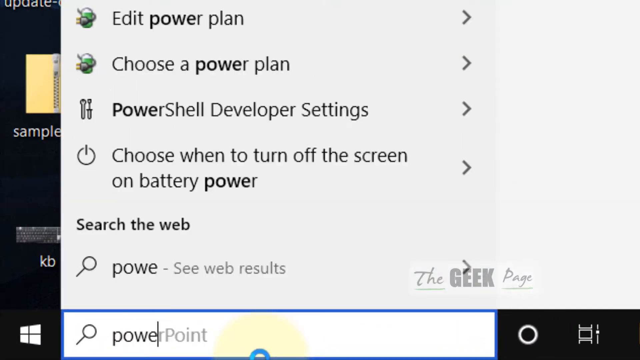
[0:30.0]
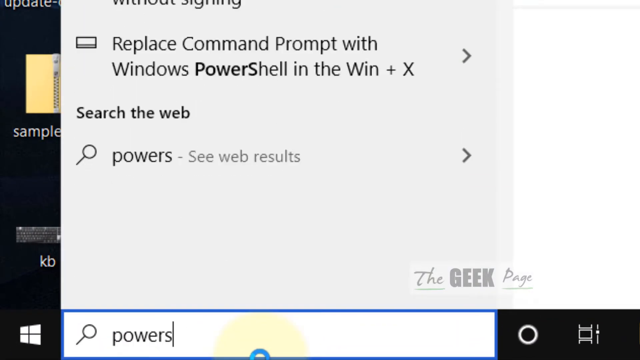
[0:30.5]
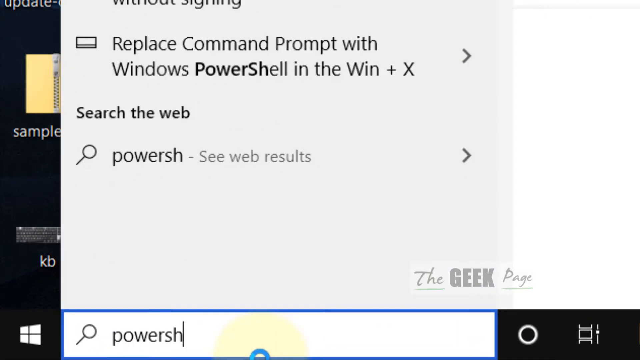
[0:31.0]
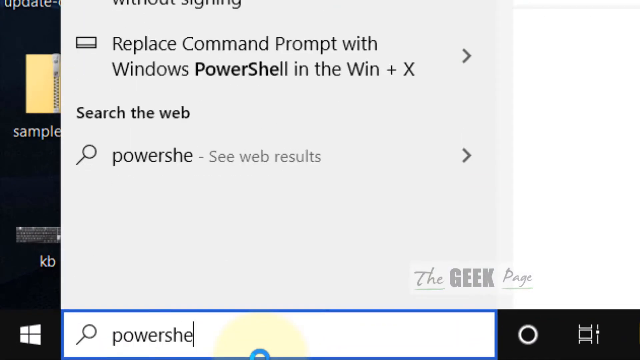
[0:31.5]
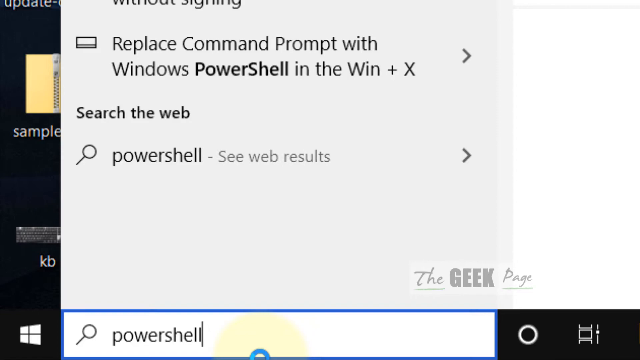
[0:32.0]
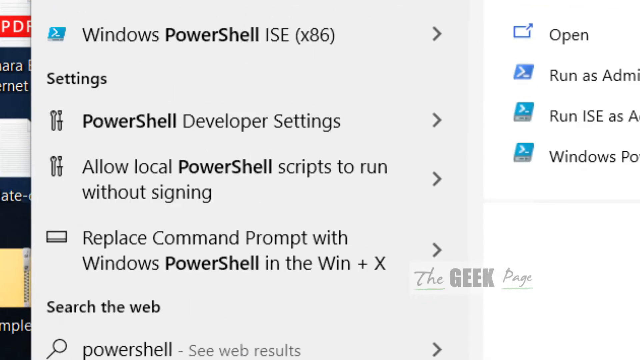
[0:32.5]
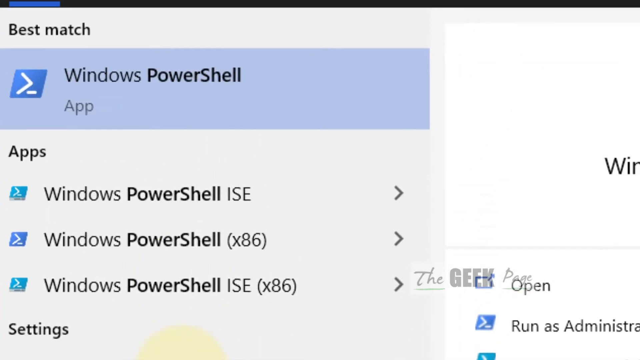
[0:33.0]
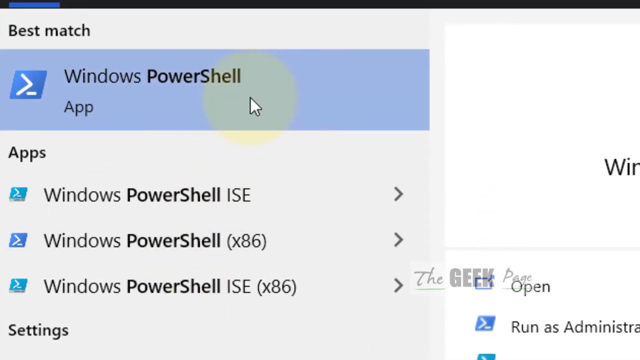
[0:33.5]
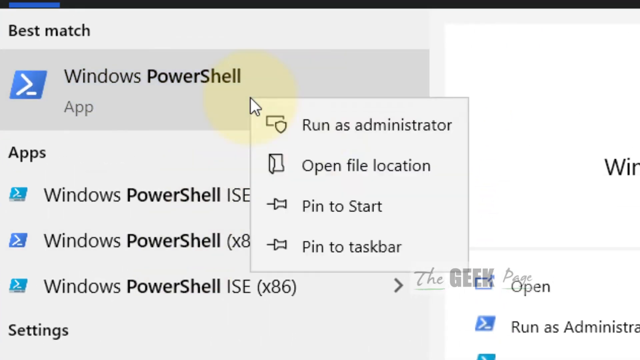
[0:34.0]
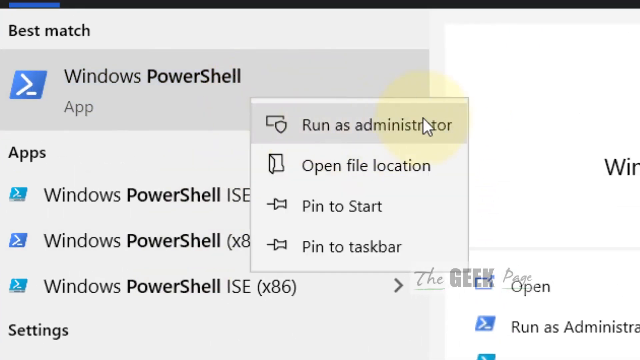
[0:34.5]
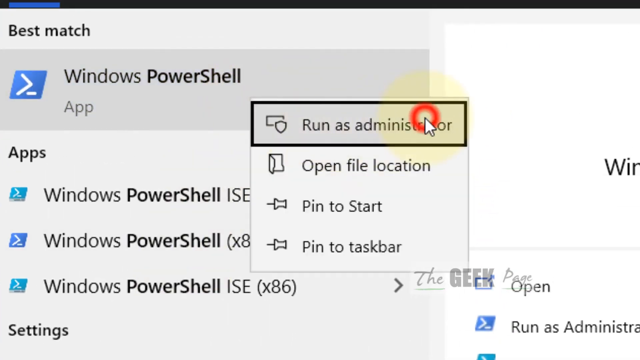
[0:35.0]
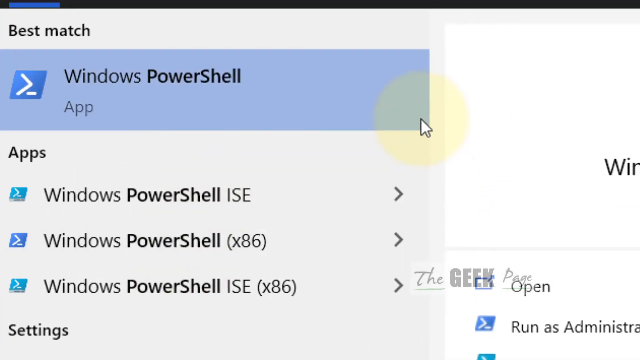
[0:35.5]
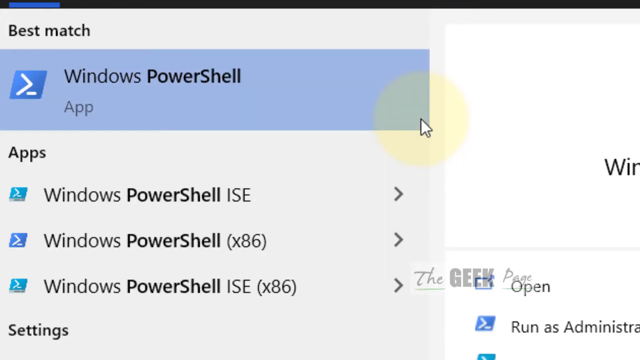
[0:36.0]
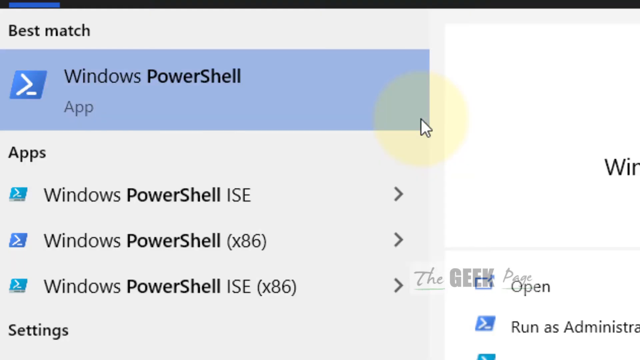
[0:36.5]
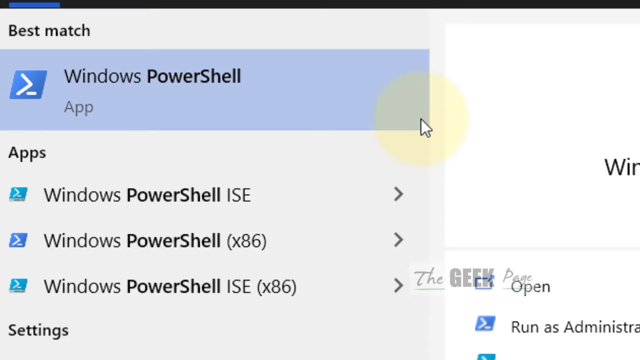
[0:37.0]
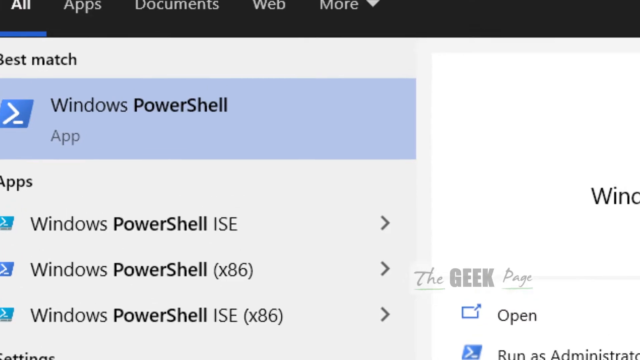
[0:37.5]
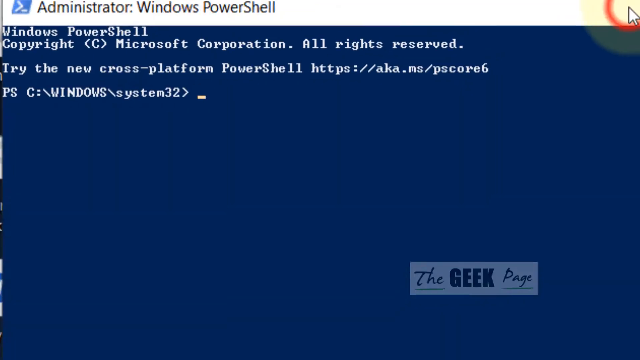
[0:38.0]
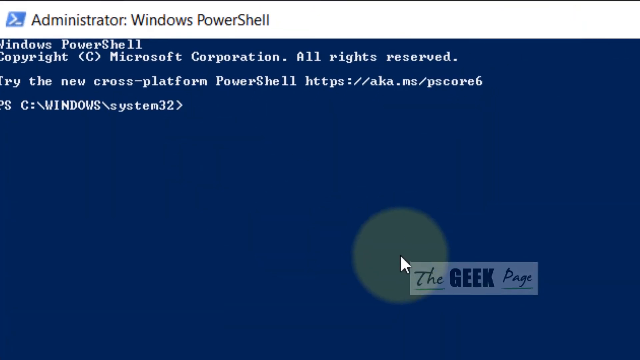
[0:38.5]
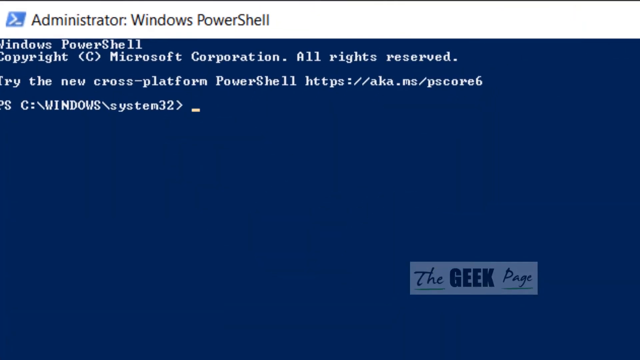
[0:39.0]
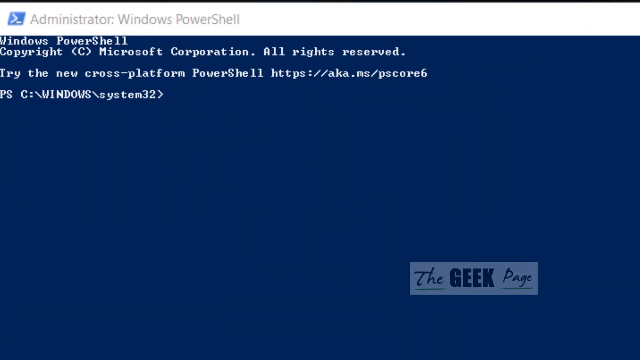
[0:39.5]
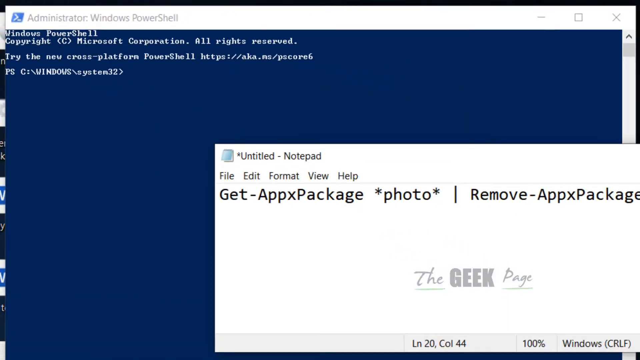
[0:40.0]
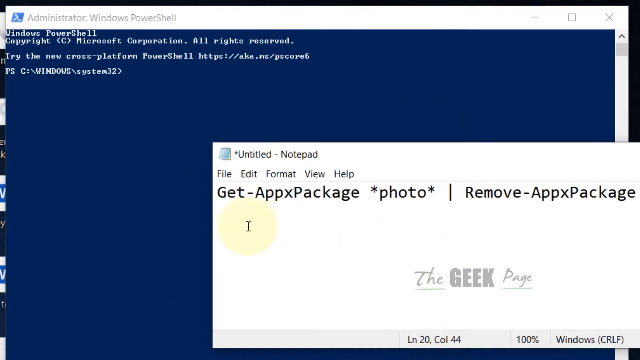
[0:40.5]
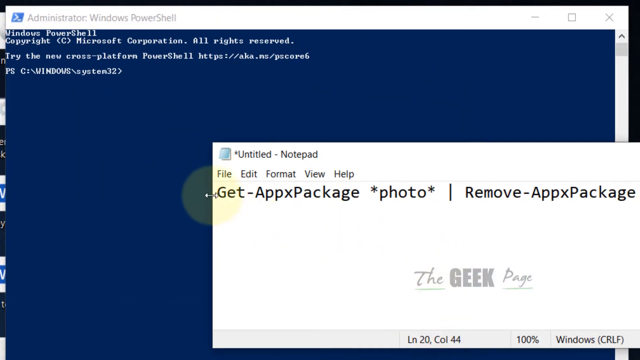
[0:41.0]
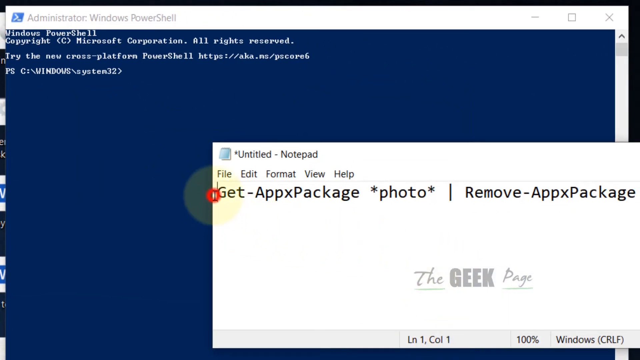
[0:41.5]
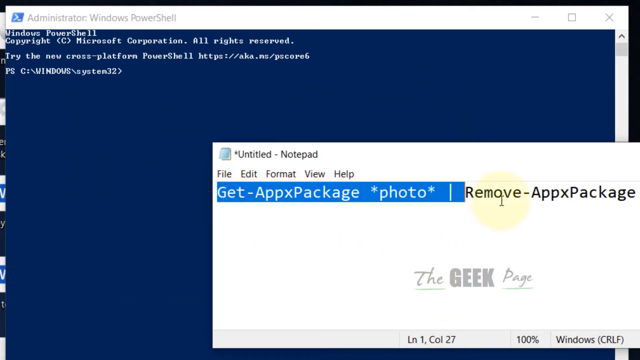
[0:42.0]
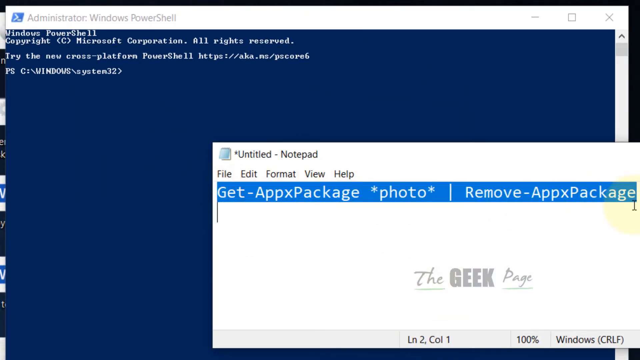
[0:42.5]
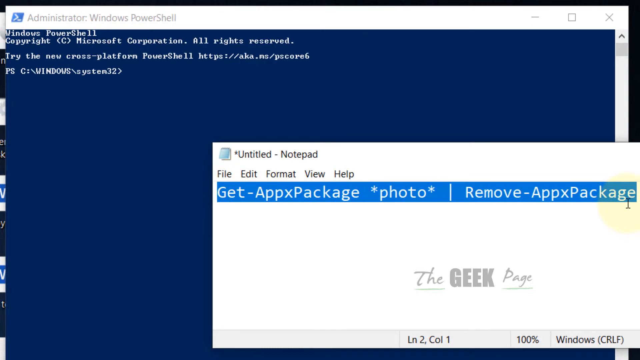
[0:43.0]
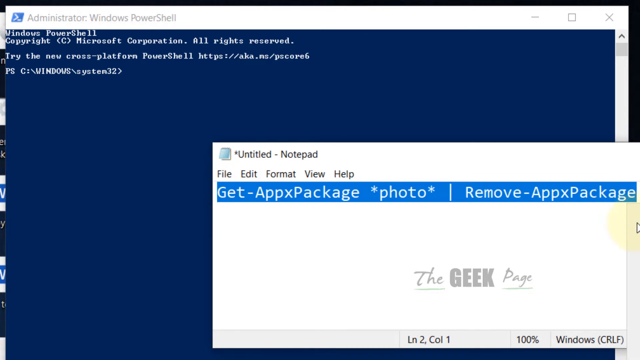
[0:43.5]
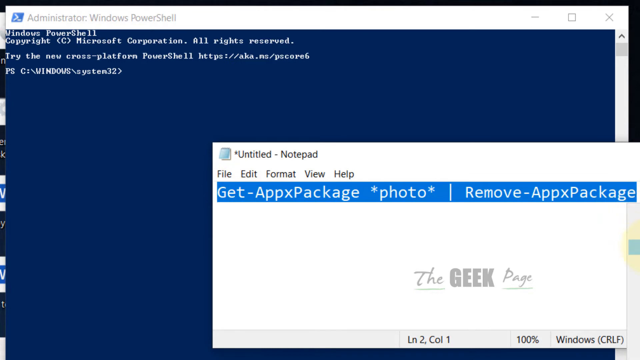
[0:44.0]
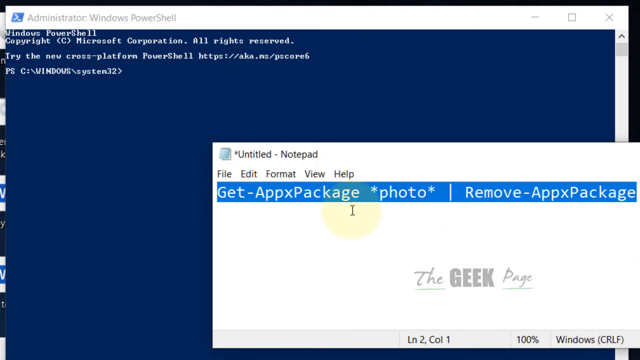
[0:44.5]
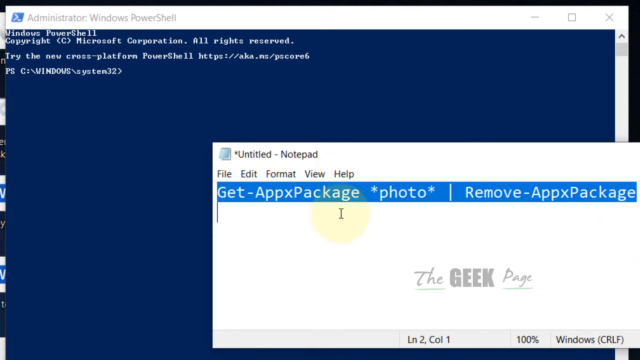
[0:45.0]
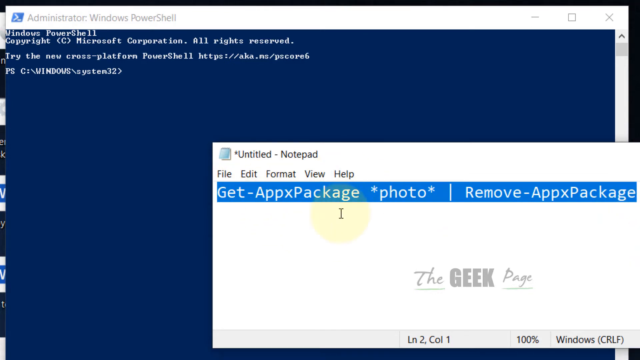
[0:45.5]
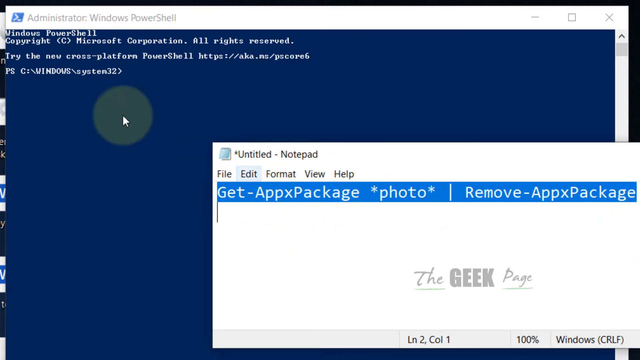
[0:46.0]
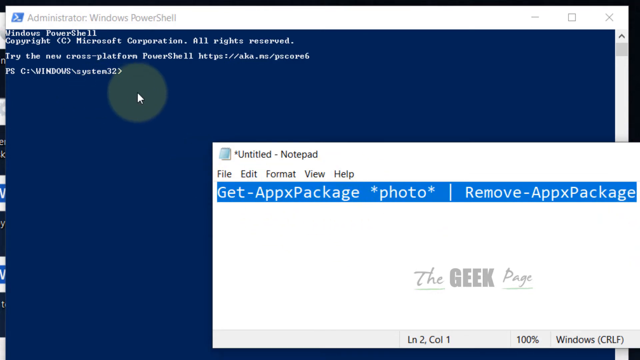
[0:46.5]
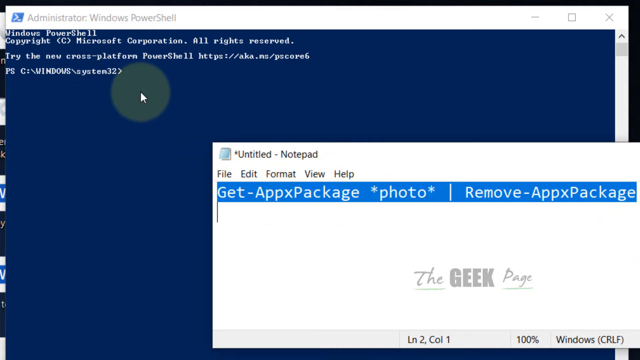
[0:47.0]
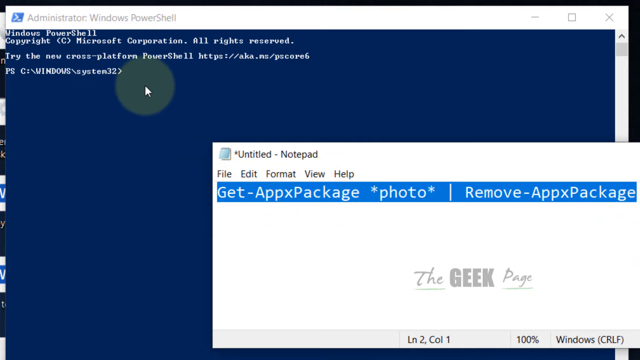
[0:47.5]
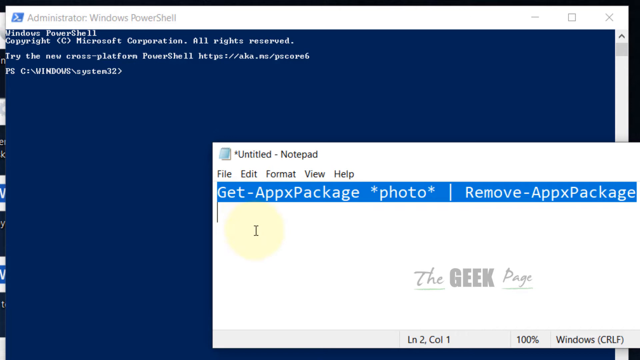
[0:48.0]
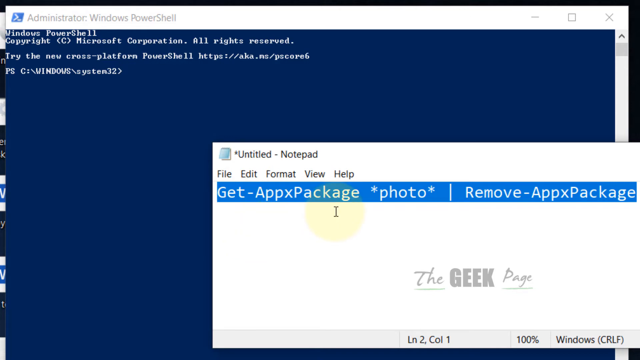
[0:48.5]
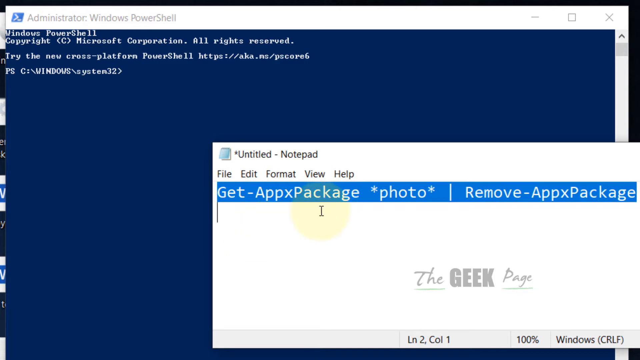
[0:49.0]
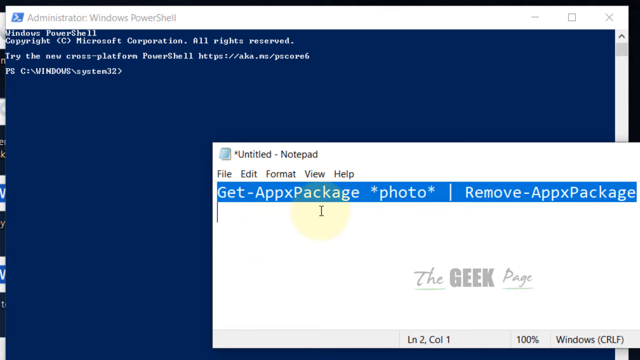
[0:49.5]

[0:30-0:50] A white pop-up appears against a black home screen, showing from top to bottom the options "Edit power plan", "Choose a power plan", "PowerShell developer settings", "Choose when to turn off the screen on battery power", and then "Search the web" with a magnifying glass and "see web results". Each option has a right arrow button. Someone scrolls up with the mouse to the Windows PowerShell option and highlights it in blue. Below it are "Windows PowerShell ISE" as an app and "Windows PowerShell x86". A pop-up then appears in the lower right corner with a dark background. On a white header at the top it reads "Administrator Windows PowerShell". Below that it reads "Windows PowerShell Copyright Microsoft Corporation All Rights Reserved", and below that "try the new cross-platform PowerShell" with an address beginning "https://aka.ns/pscore".